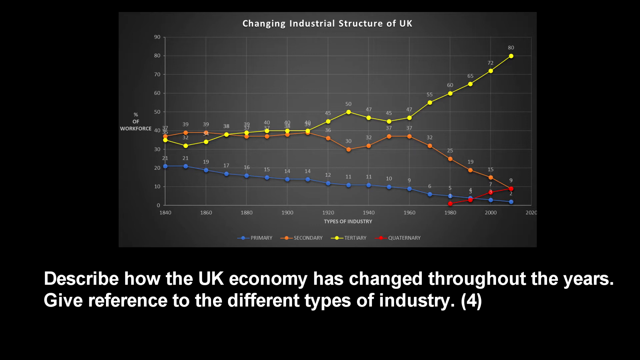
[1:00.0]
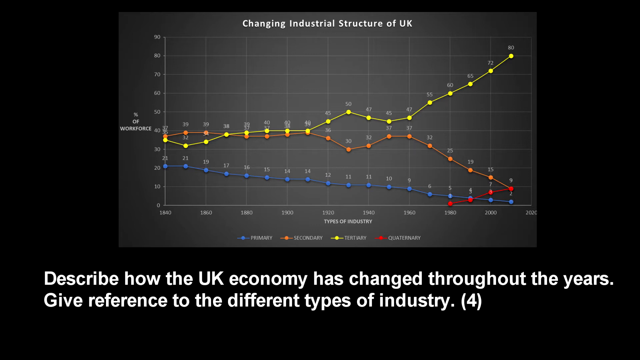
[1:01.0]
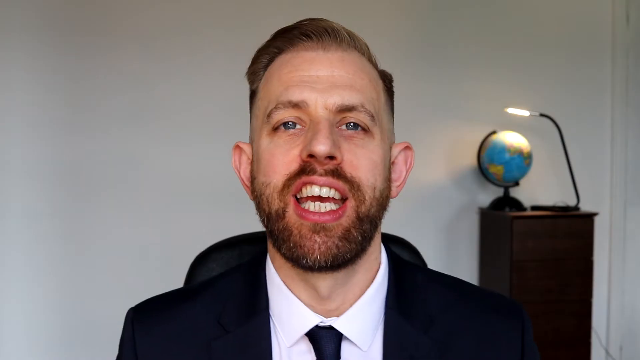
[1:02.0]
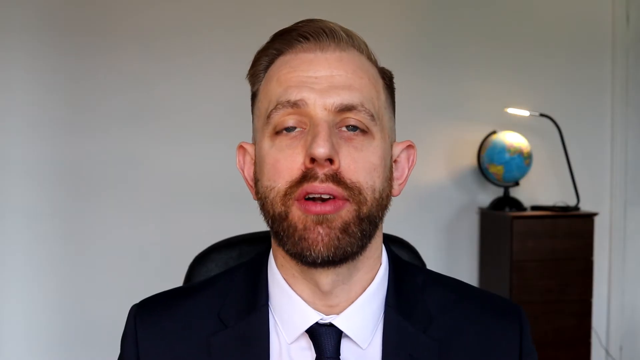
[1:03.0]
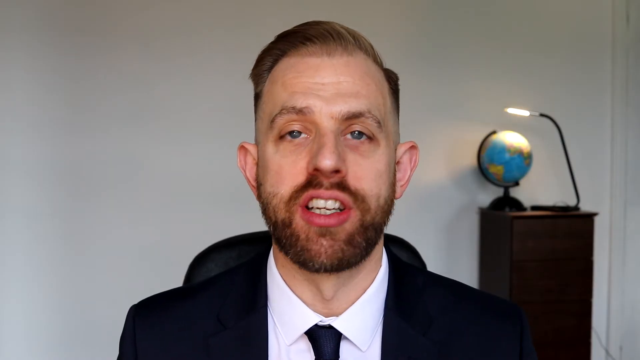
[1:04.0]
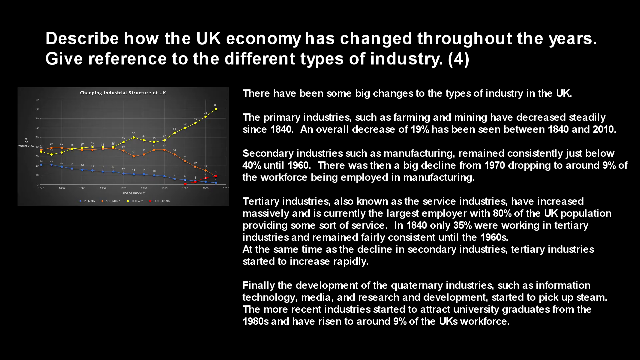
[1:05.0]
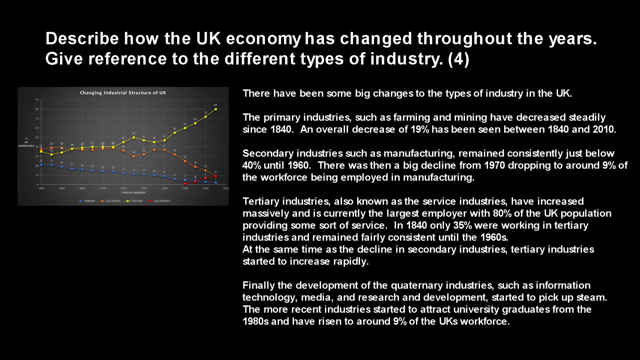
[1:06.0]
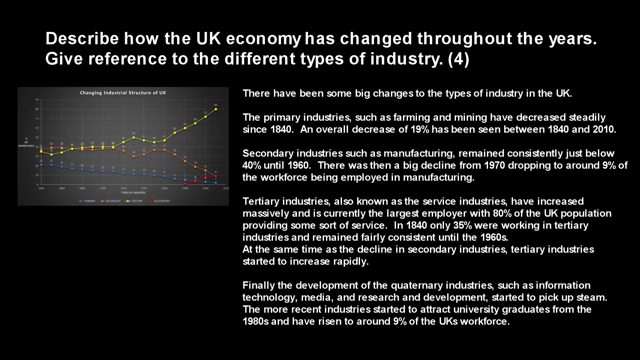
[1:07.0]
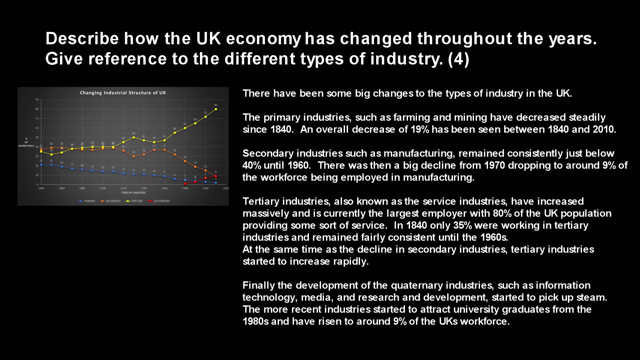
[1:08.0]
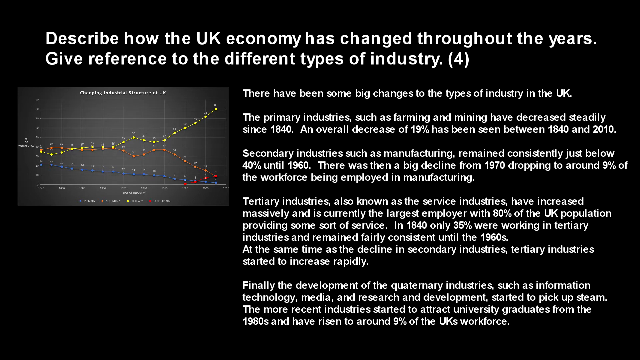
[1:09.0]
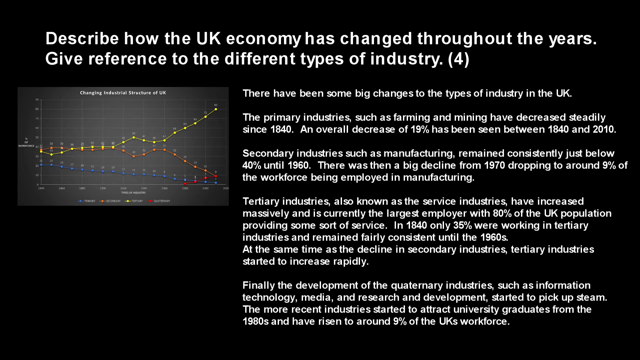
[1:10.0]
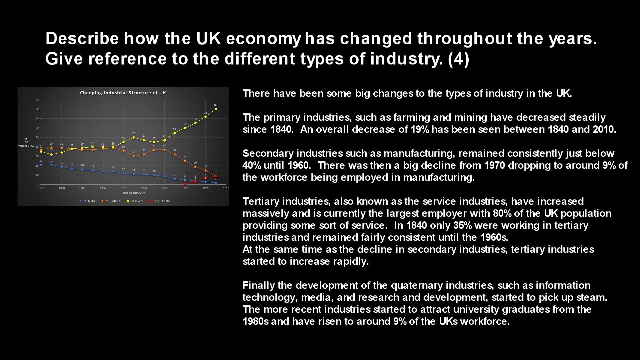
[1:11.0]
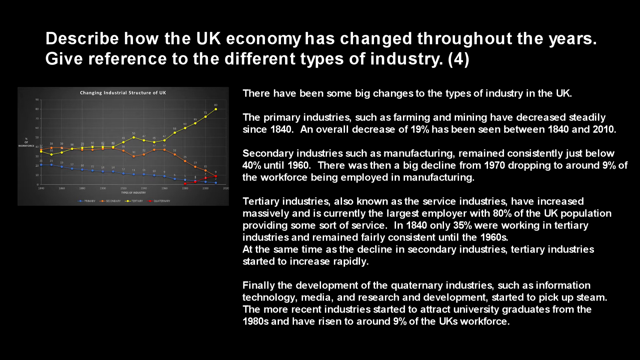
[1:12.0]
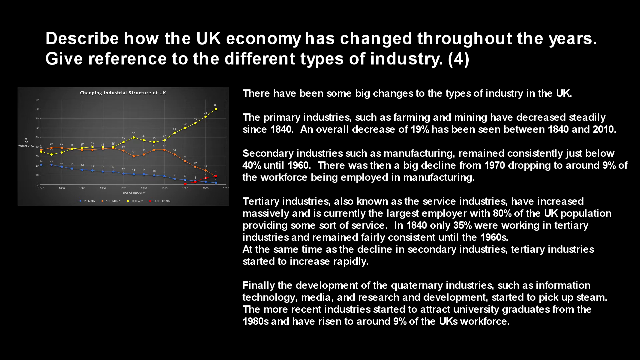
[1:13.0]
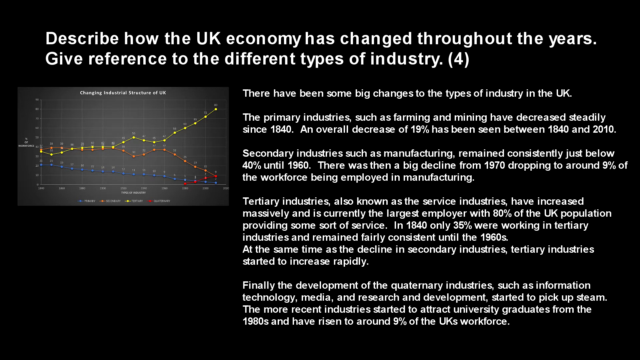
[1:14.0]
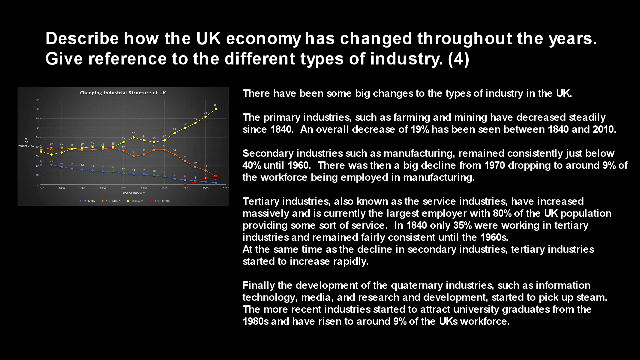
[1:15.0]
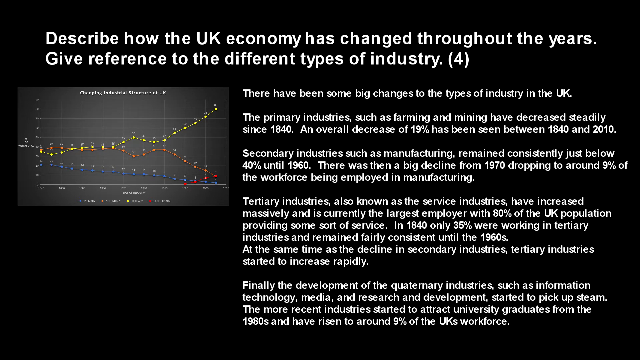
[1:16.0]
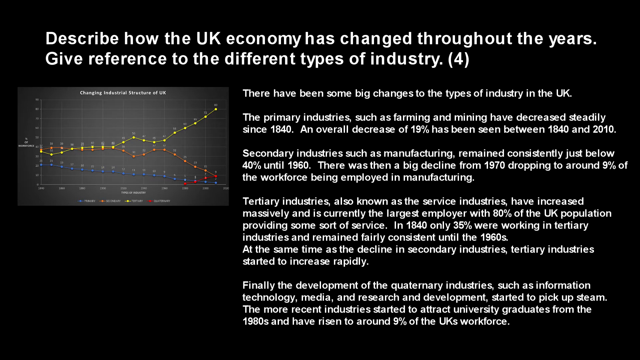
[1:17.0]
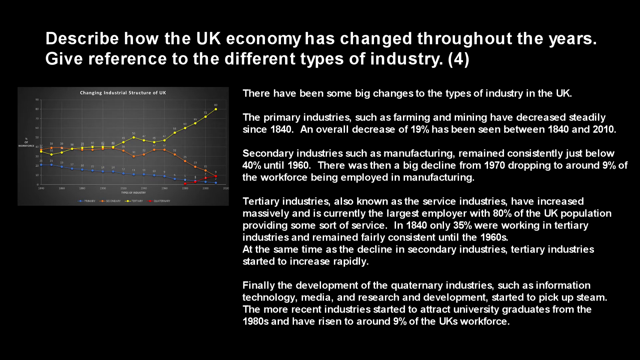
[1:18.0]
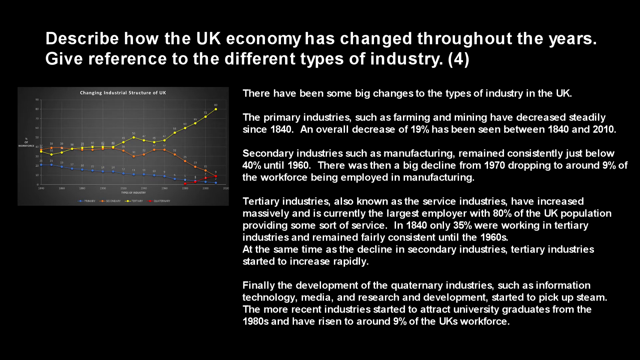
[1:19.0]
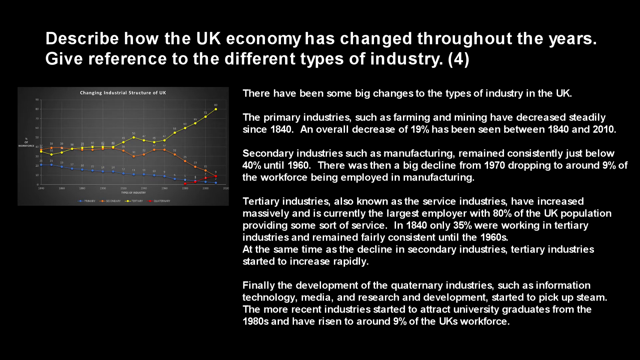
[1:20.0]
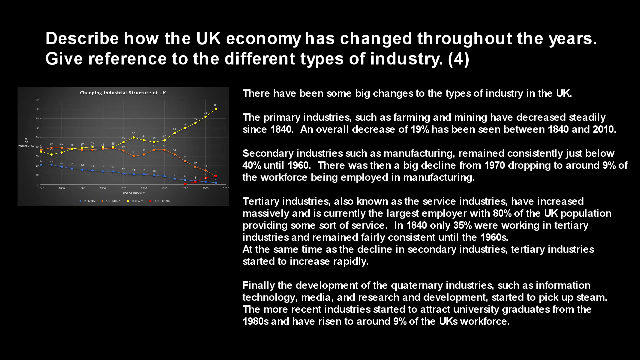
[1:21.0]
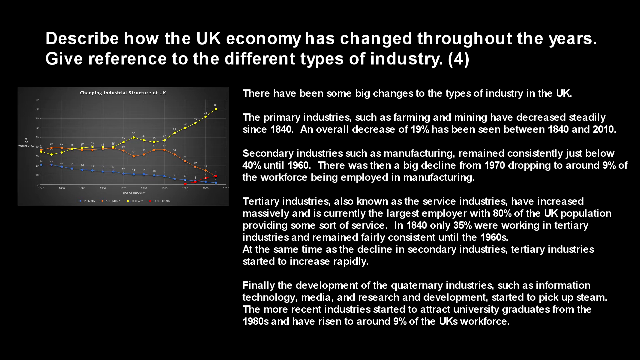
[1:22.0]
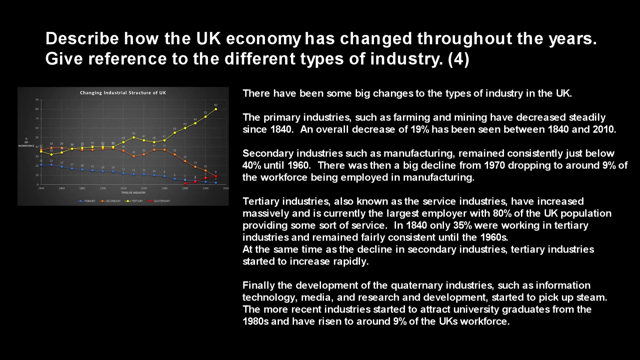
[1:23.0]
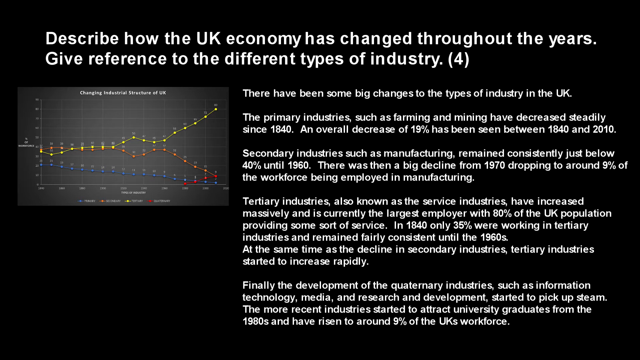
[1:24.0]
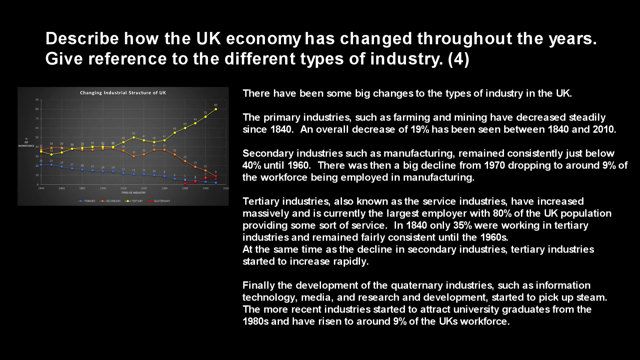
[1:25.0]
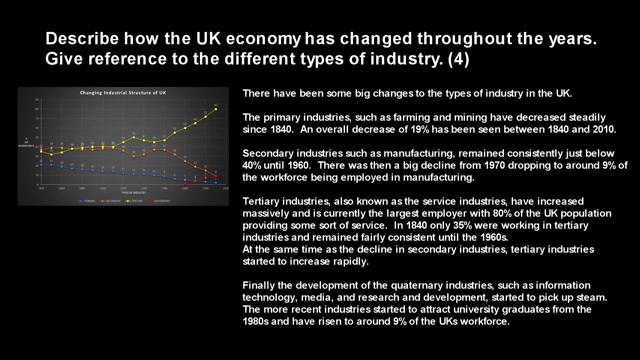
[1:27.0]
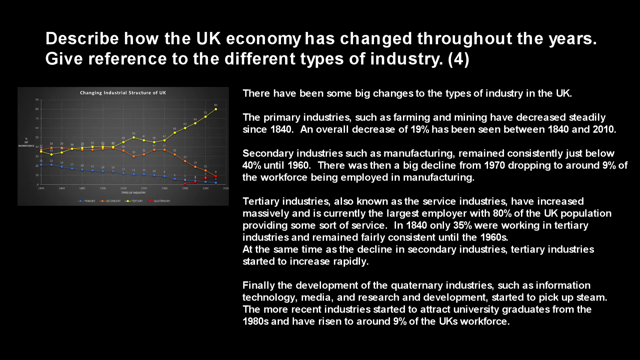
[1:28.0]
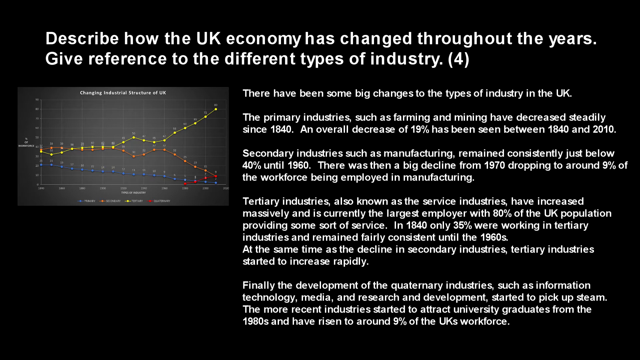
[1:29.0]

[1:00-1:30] The diagram fluctuates. The yellow line drops slowly and later rises. The industry shown in yellow dots is at a low level and then increases.